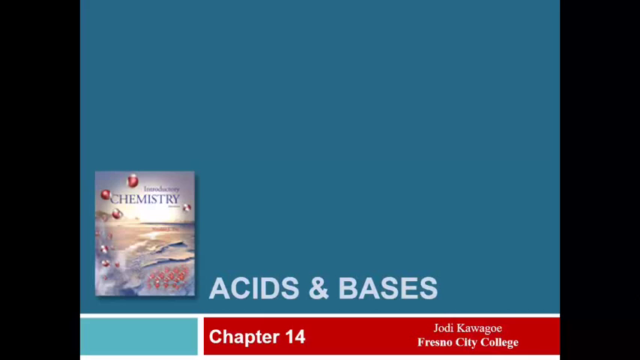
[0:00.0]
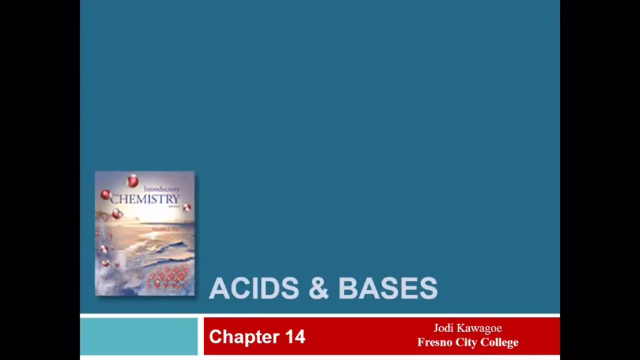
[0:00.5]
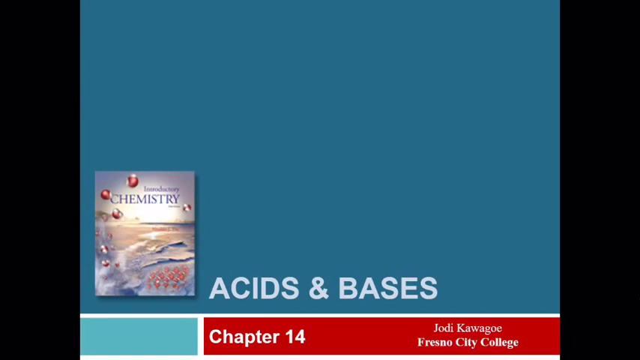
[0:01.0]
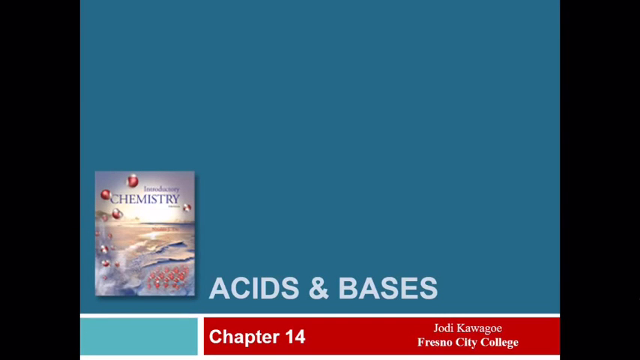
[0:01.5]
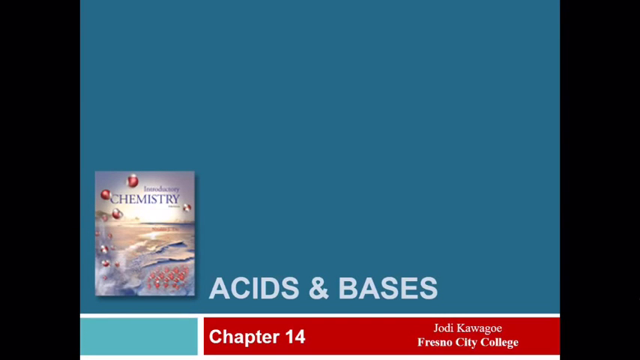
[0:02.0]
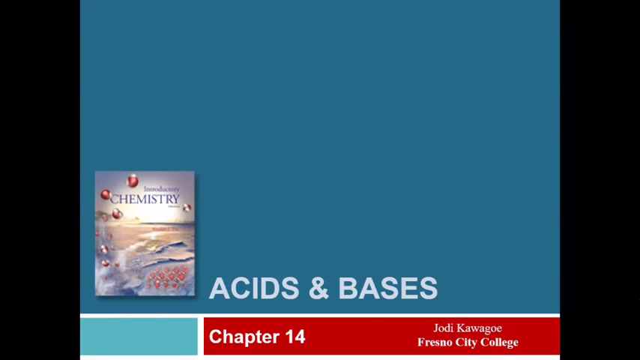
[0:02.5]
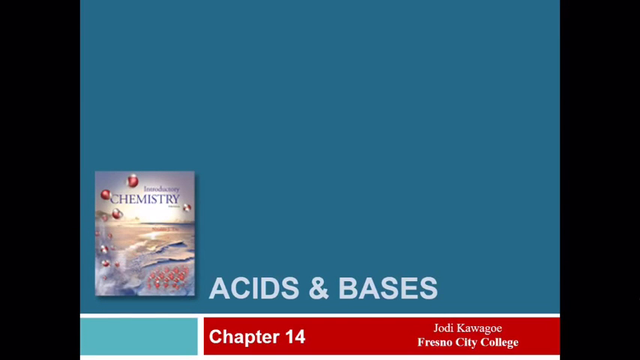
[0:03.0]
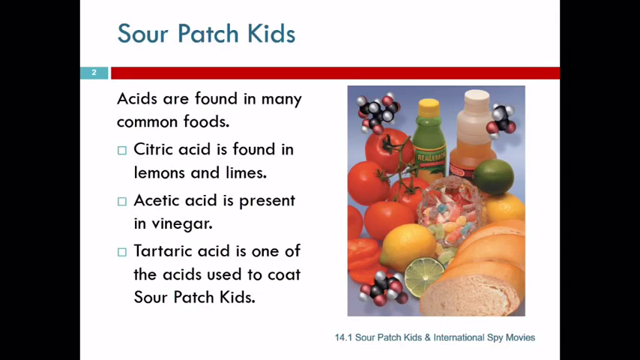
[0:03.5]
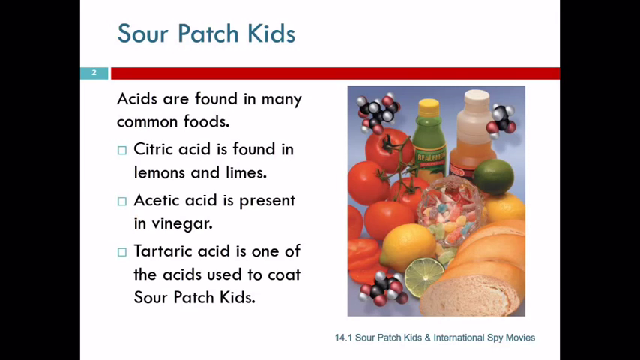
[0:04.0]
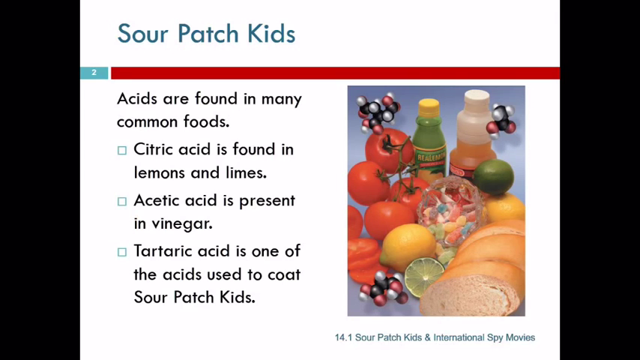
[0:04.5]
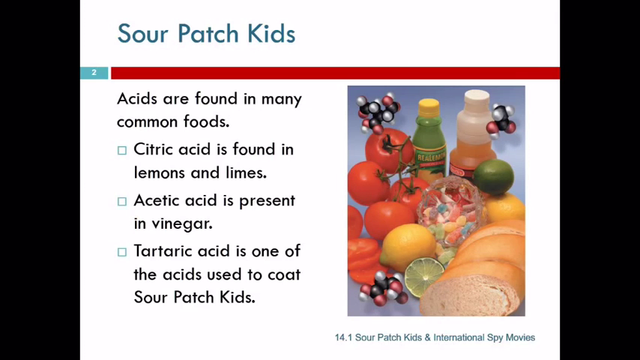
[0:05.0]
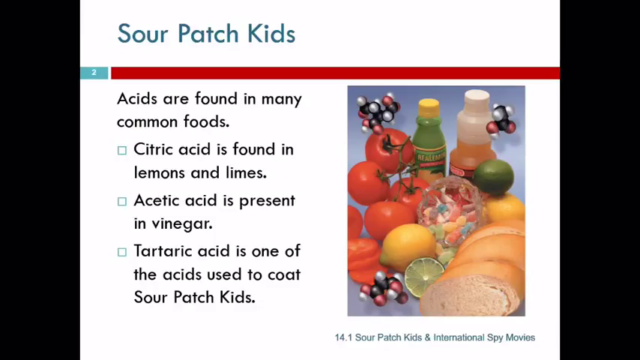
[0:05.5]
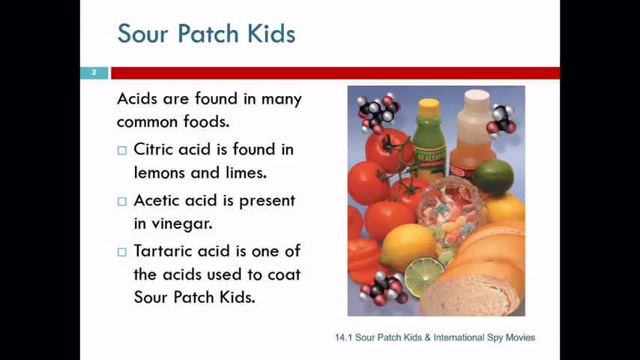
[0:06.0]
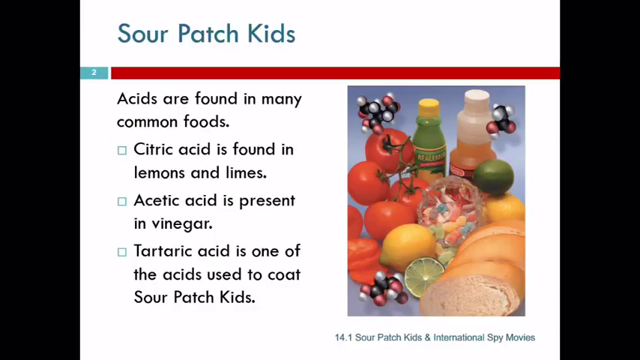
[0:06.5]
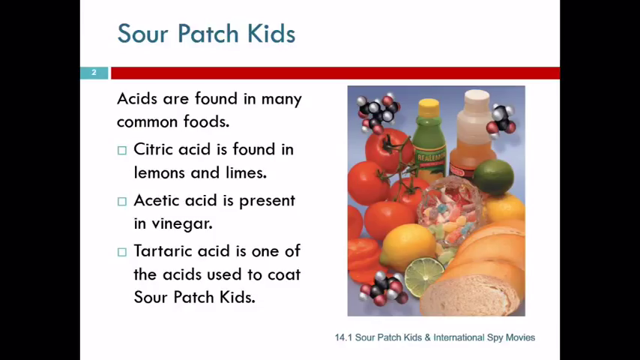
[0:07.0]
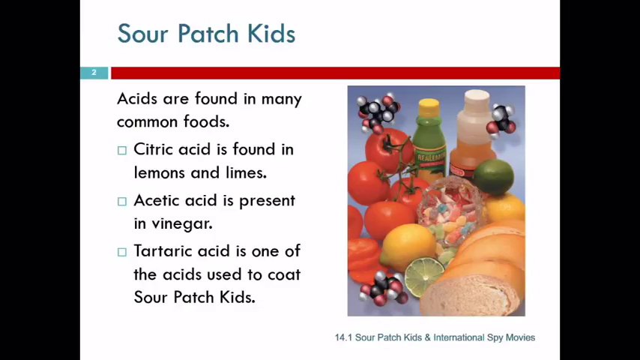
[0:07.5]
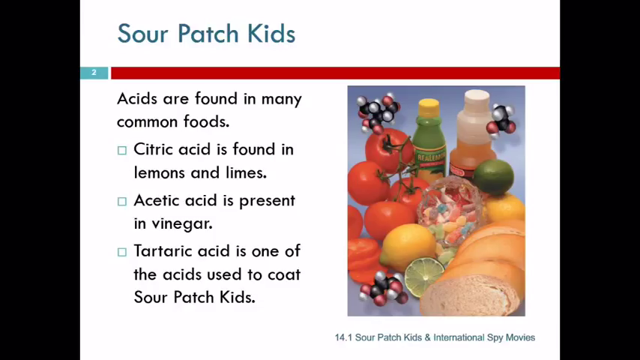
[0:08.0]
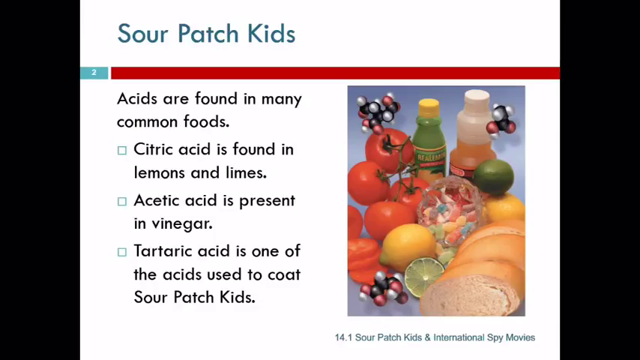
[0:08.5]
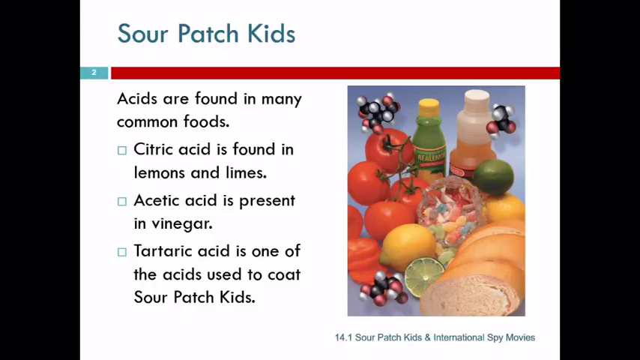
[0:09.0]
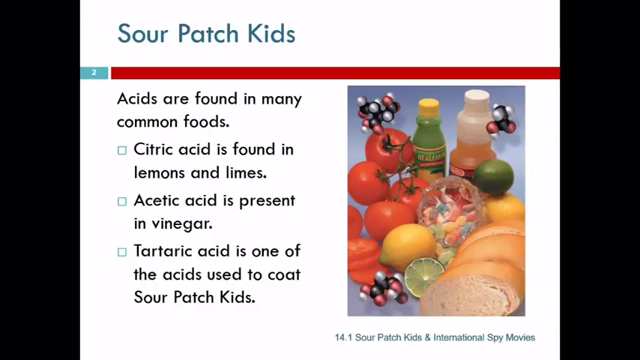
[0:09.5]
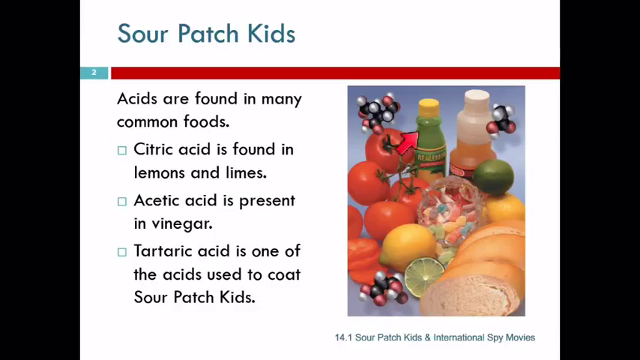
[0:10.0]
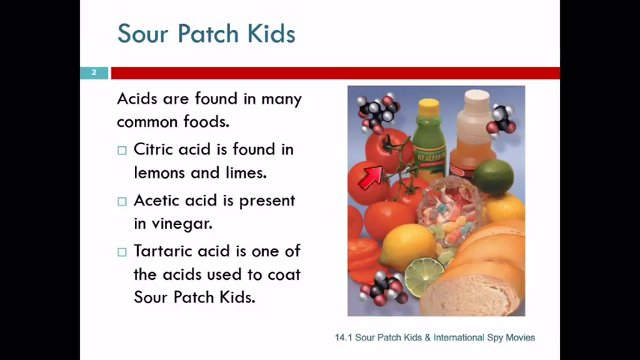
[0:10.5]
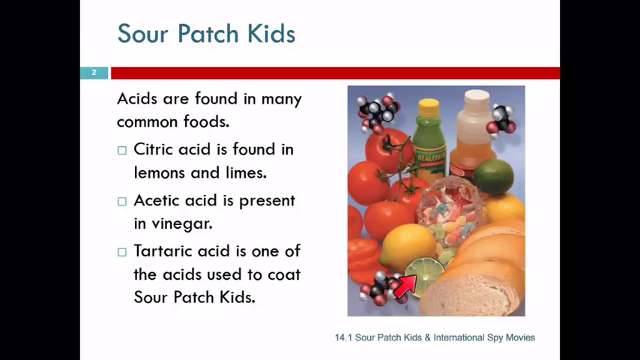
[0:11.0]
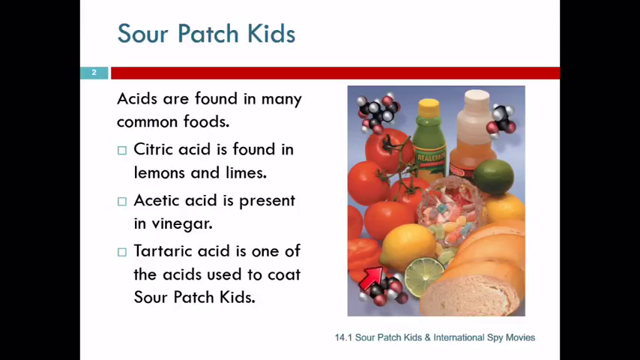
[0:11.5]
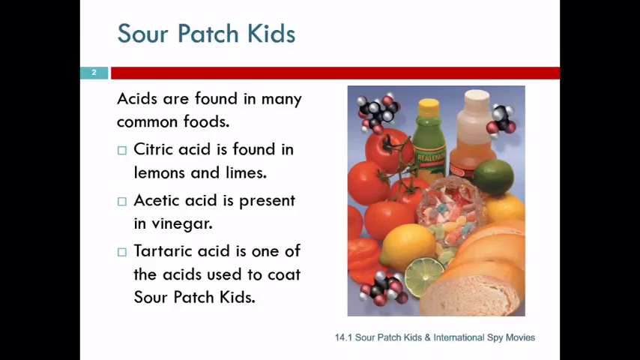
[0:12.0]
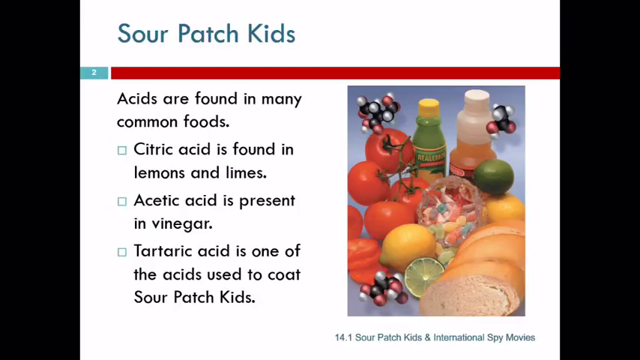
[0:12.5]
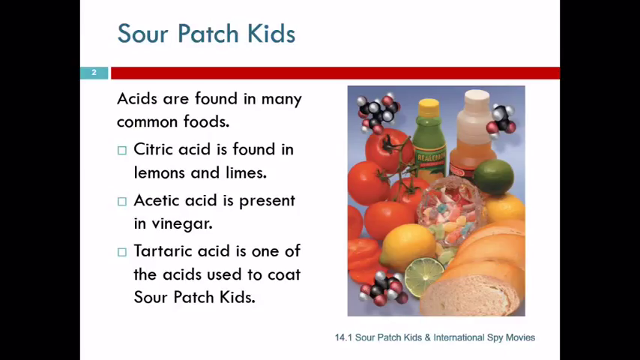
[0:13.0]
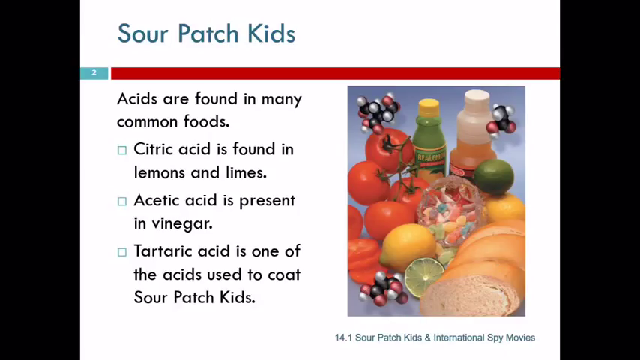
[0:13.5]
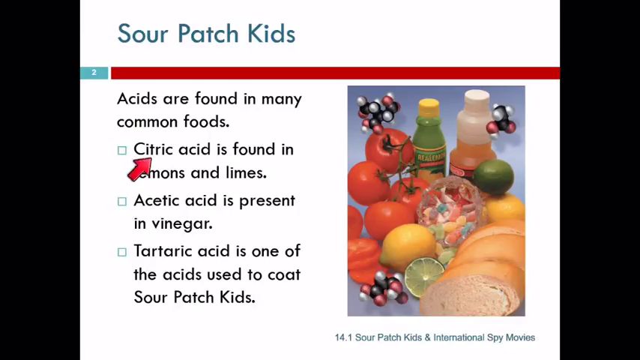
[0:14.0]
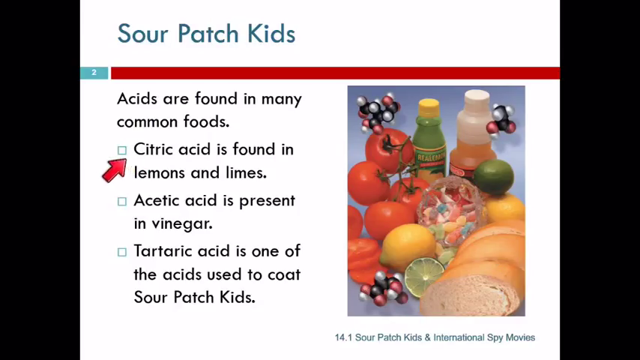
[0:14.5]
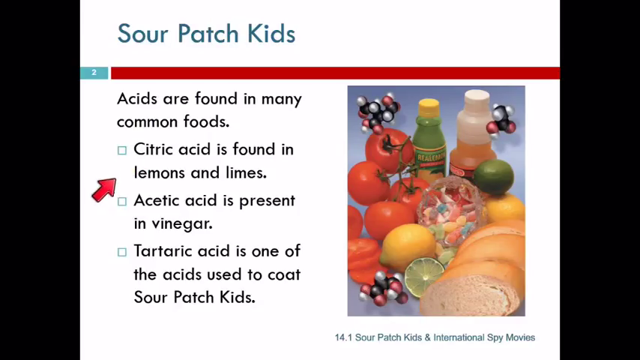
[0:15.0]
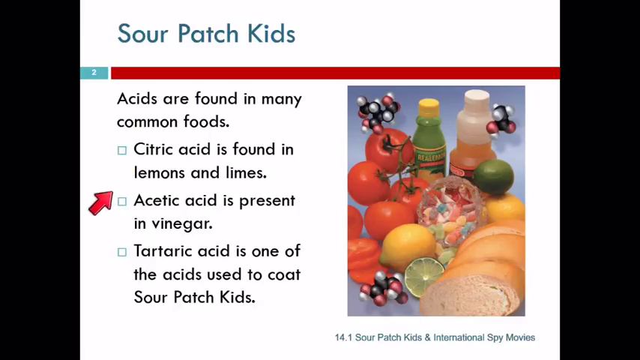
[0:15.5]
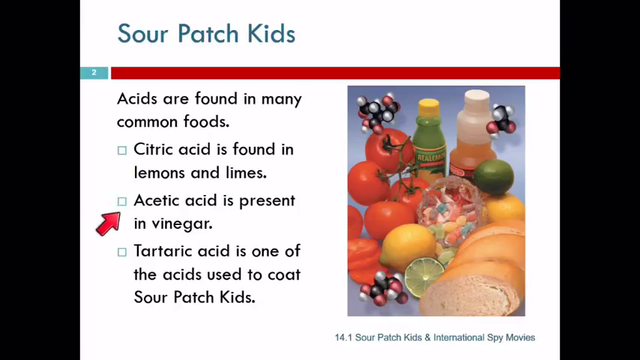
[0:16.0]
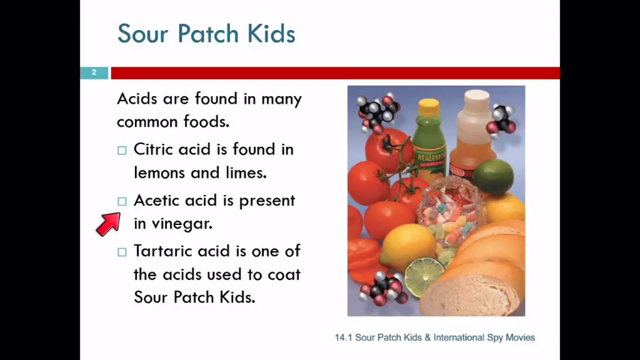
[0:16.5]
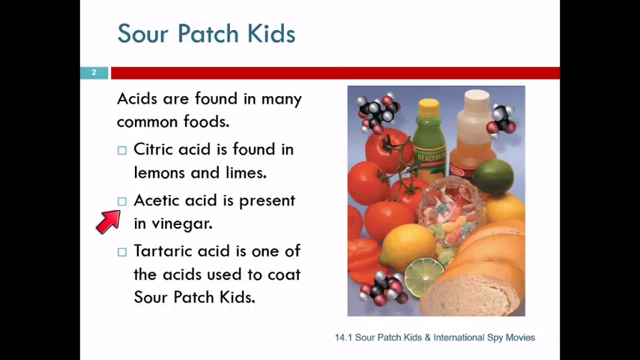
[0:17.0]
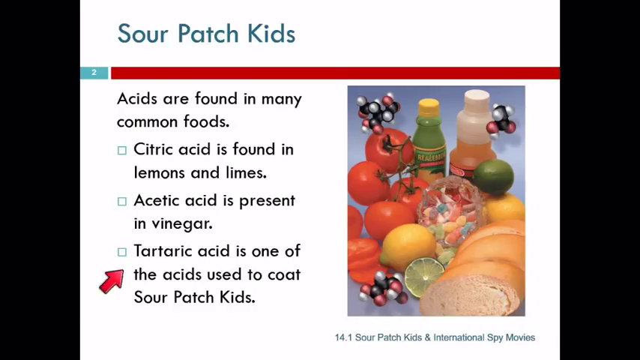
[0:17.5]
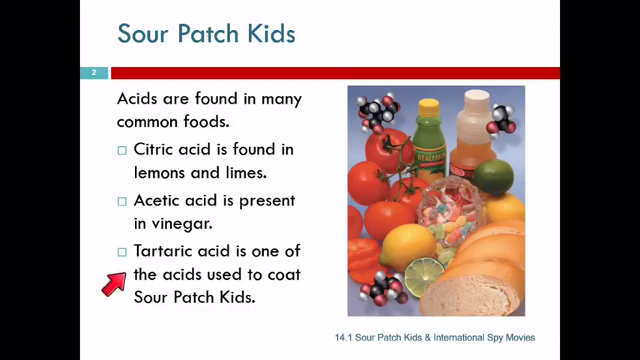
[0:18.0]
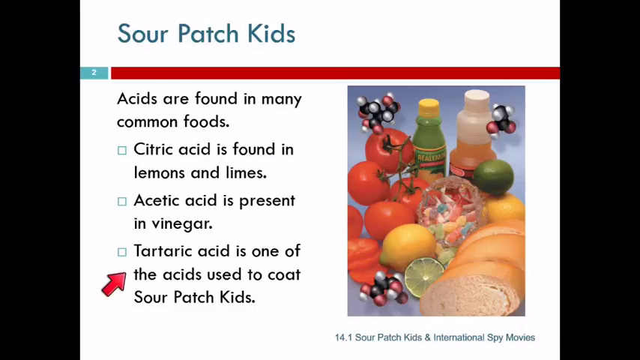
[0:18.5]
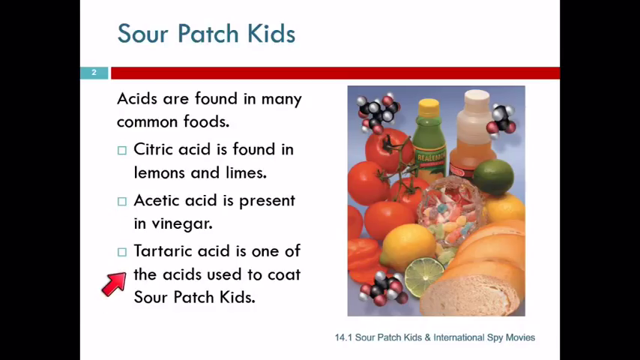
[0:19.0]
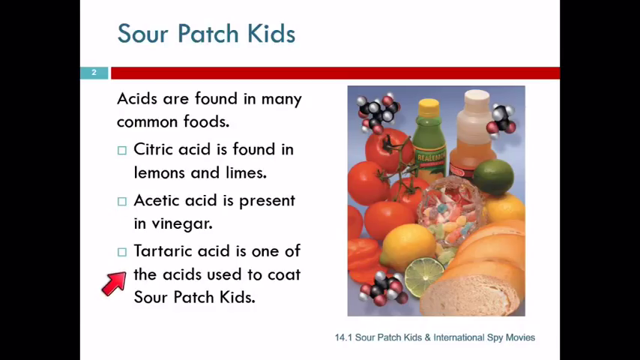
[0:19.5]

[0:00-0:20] The video opens on a blue background. In the bottom left corner is something that appears to be a book with "chemistry" written on it. There are three red dots on the top corner of the book, and on its bottom part is written "acids and bases." The book opens, and on the left side "Sour Patch Kids" is written. Below that word is a red line, and on the left end of the red line is a number 2 written in white on a blue shade. In the bottom right corner of the page is an image showing different types of fruit and vegetables, with a loaf of bread on the right corner of the image. On the left side is written "acids are found in many common foods."